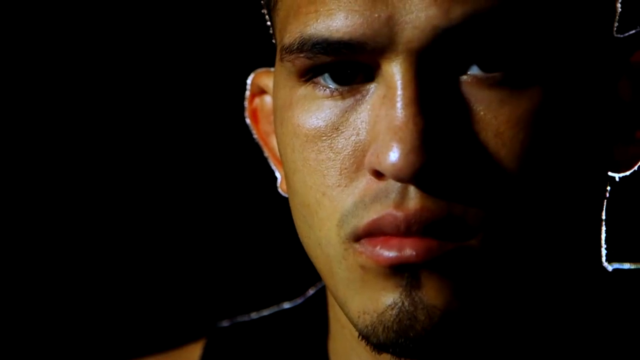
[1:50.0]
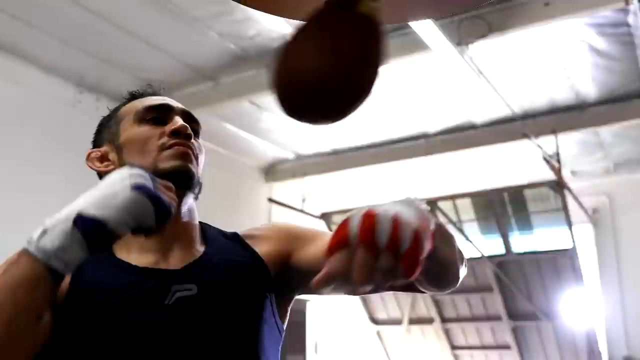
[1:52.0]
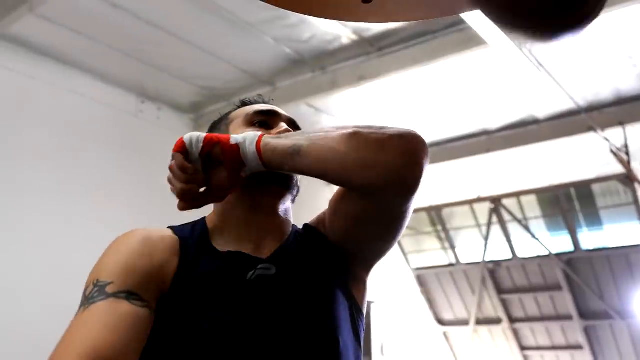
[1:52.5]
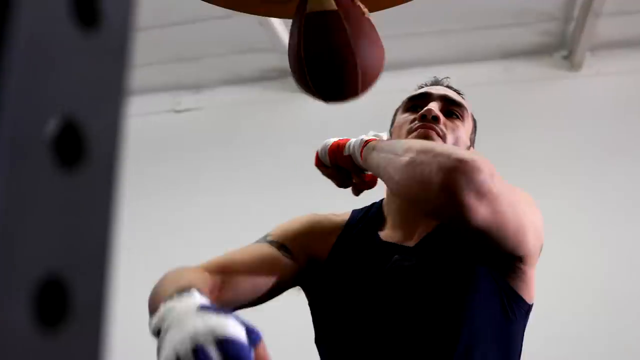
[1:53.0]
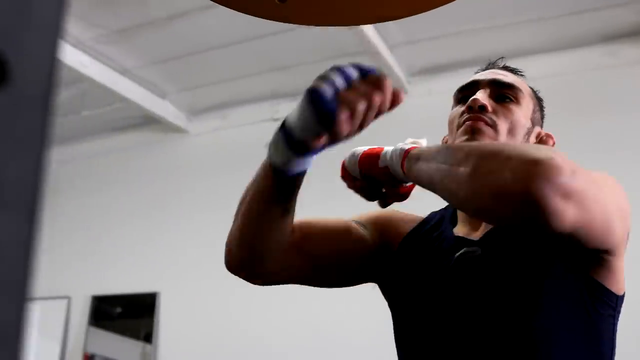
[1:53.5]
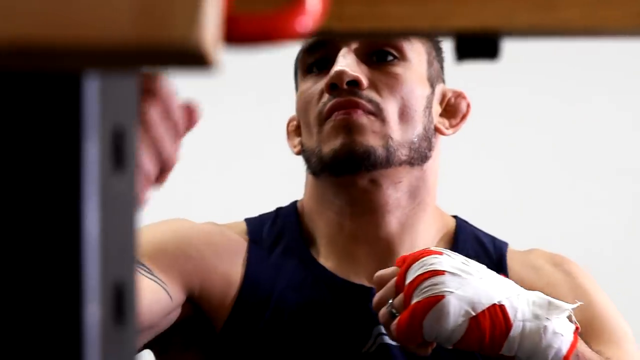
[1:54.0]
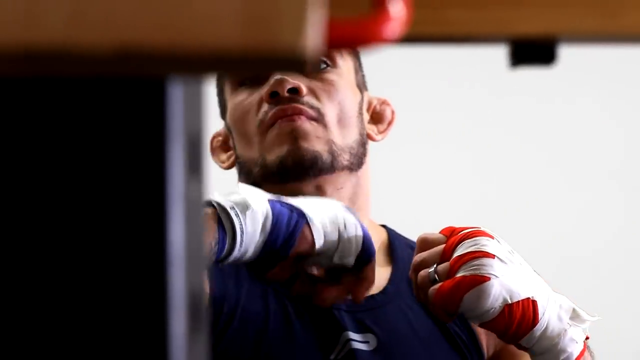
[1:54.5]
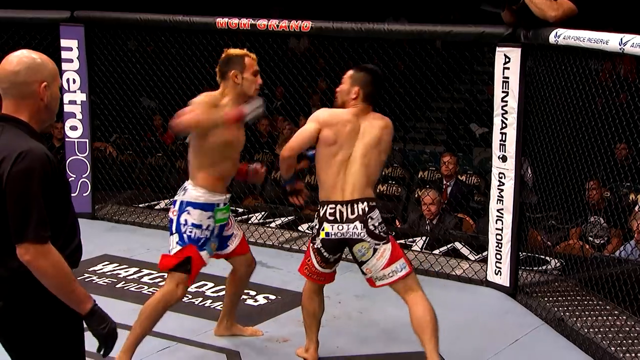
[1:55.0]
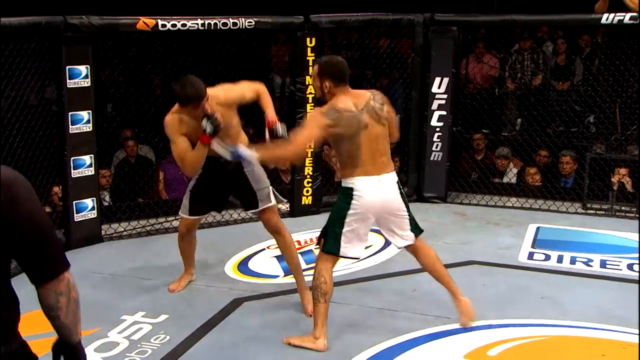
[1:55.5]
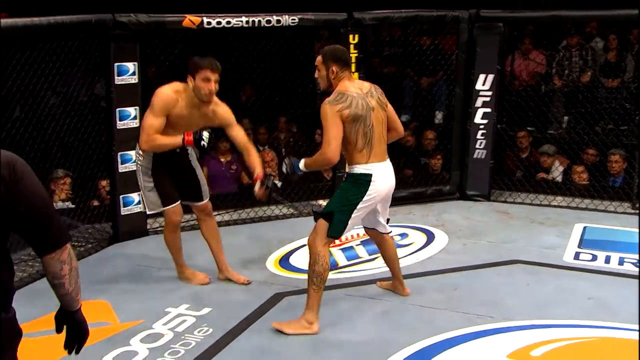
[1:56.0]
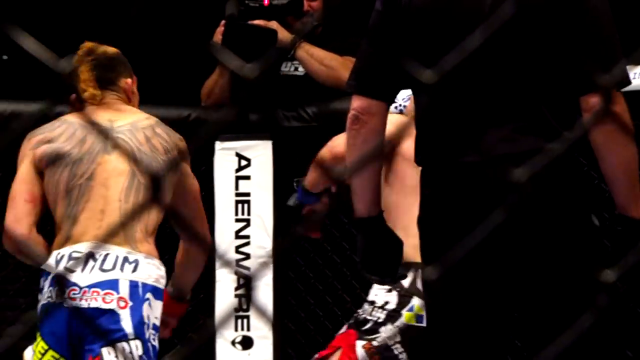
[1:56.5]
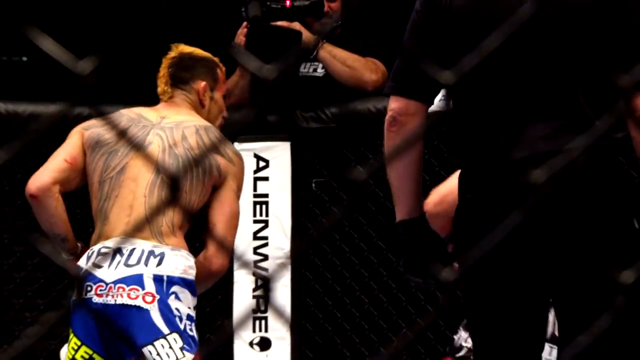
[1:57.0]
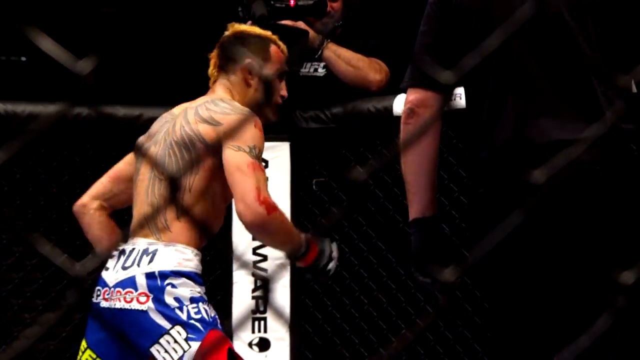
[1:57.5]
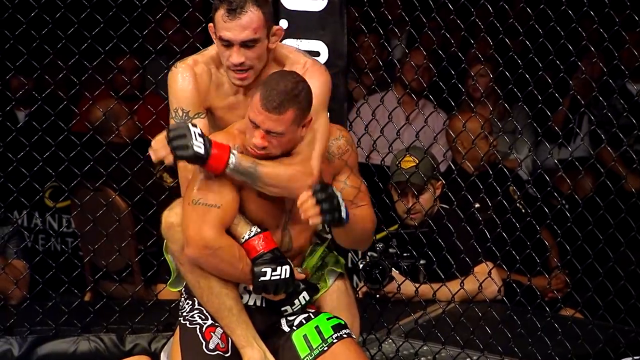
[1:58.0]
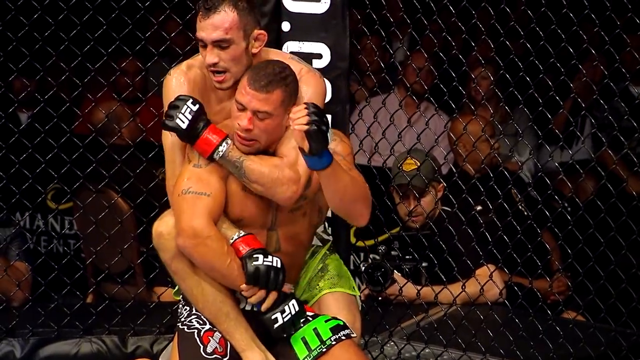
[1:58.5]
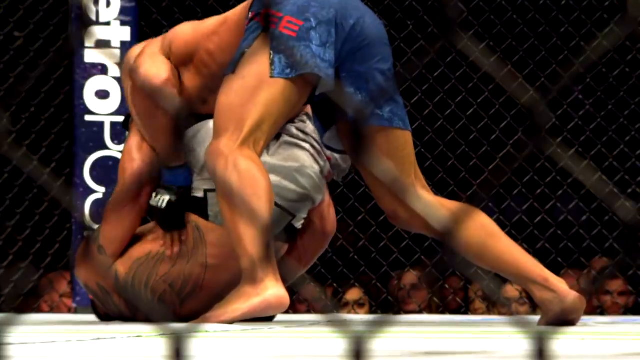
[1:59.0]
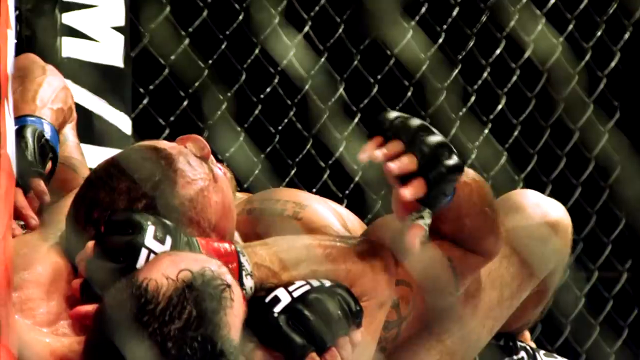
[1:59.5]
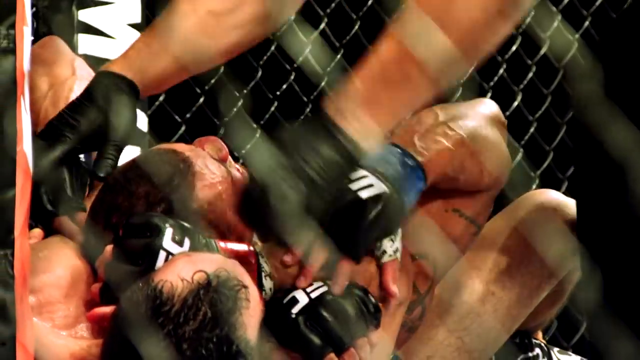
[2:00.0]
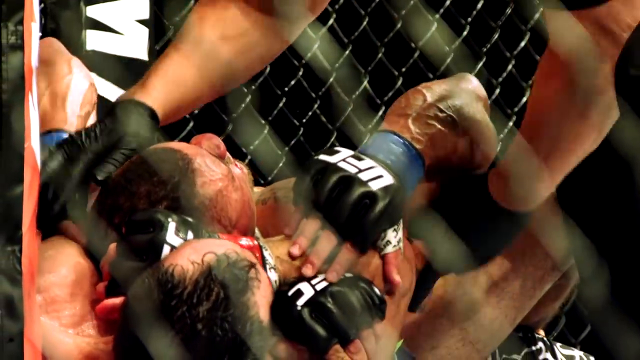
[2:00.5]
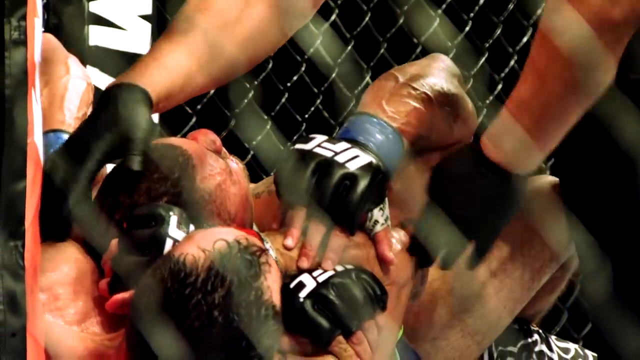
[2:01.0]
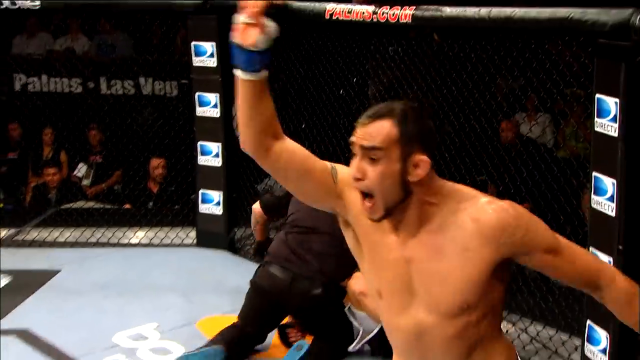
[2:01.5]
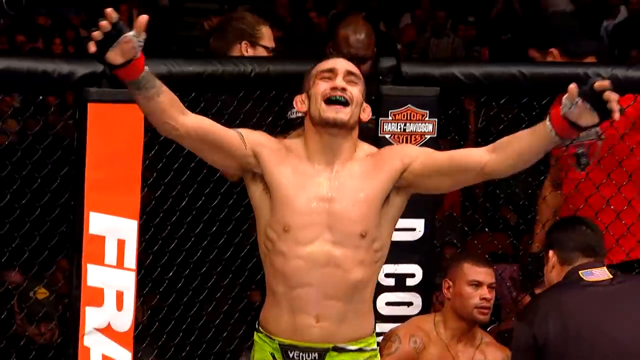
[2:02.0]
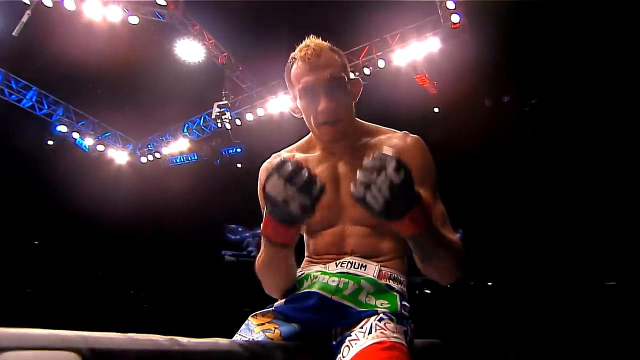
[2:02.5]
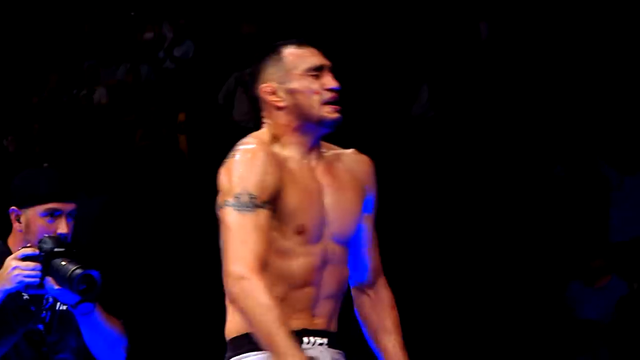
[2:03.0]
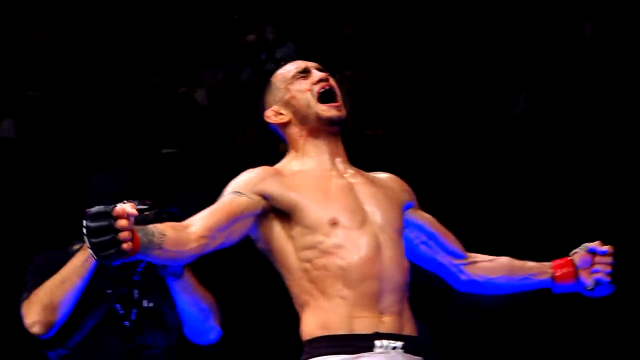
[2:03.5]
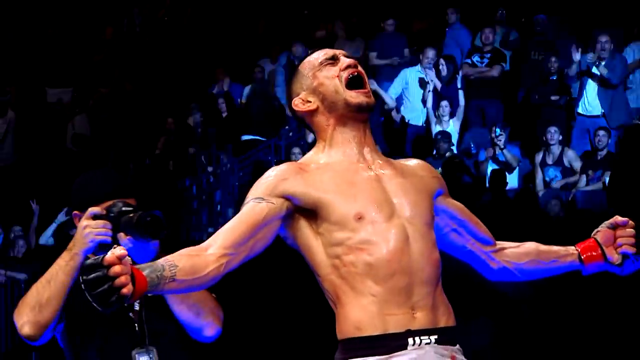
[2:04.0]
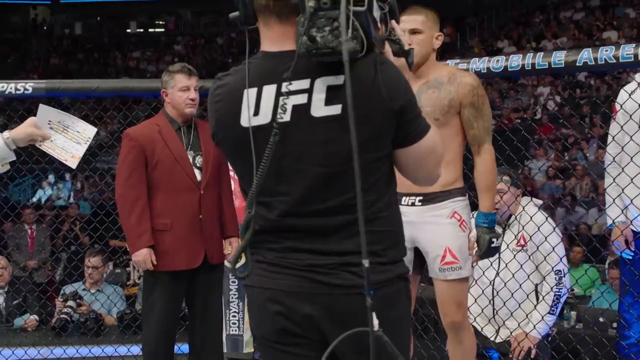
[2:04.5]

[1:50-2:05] An extreme close-up shows a Hispanic man's face with a light blinking on and off on it. It cuts right away to him punching a punching bag over and over, looking tough, then to a UFC ring where fighters fight in the center. Very rapid clips follow of two fighters who both look Hispanic, with short brown hair: shirtless, lean and muscular, covered in sweat and in some shots blood, wearing different colored shorts in each clip. In this highlight reel they kick, punch and grapple in the ring, run around, cheer as winners and punch punching bags. Lights shine on the ceiling.